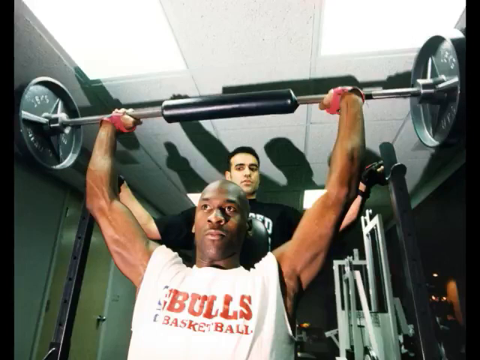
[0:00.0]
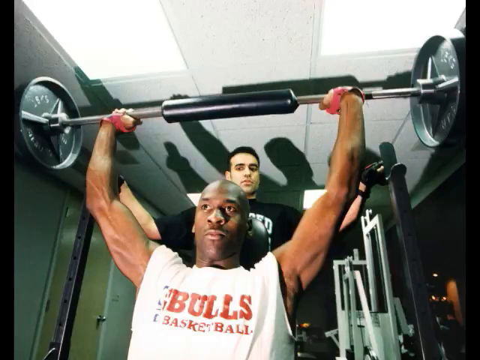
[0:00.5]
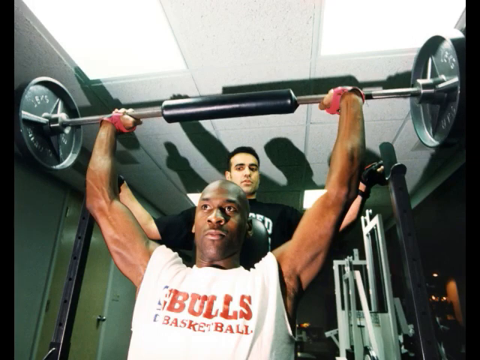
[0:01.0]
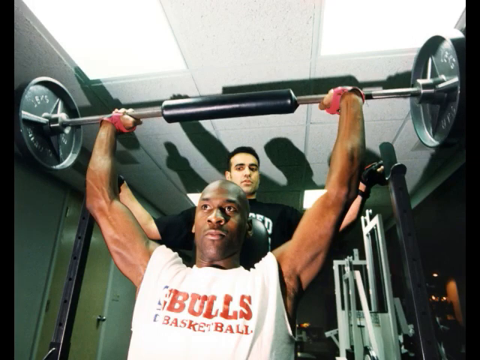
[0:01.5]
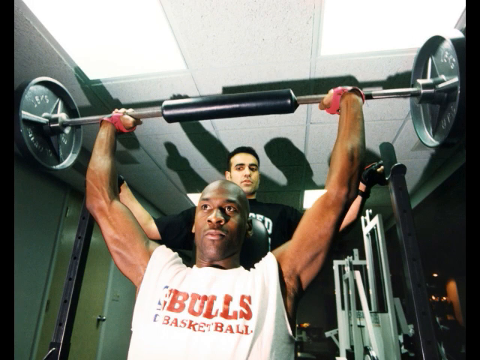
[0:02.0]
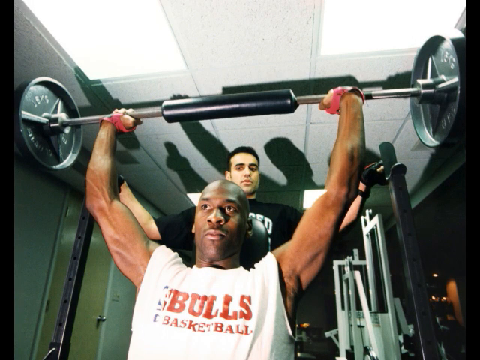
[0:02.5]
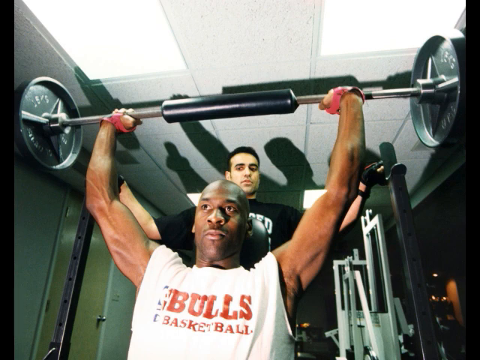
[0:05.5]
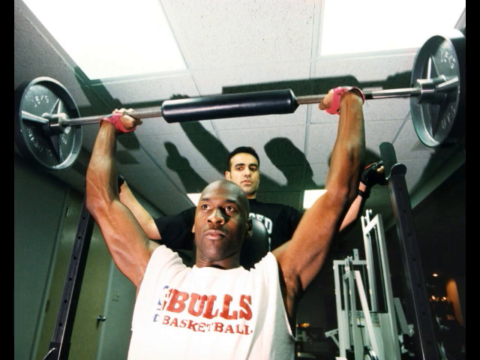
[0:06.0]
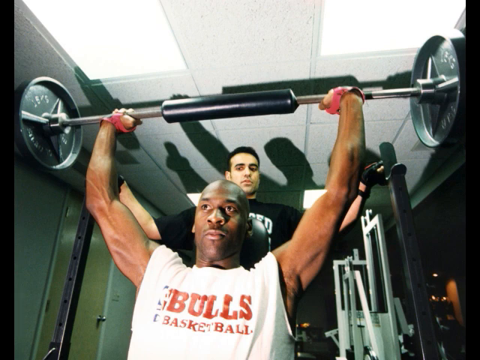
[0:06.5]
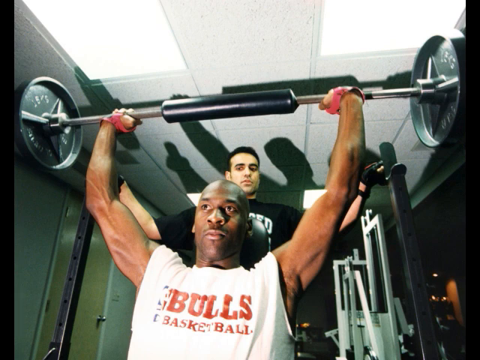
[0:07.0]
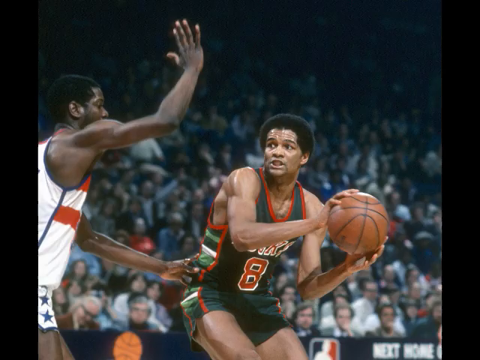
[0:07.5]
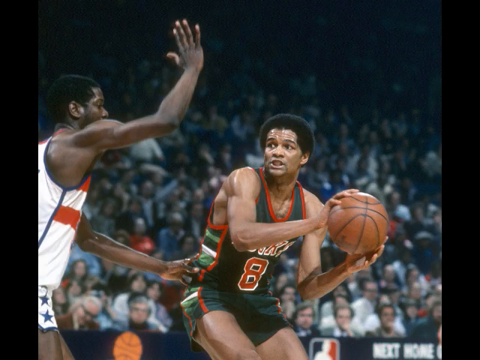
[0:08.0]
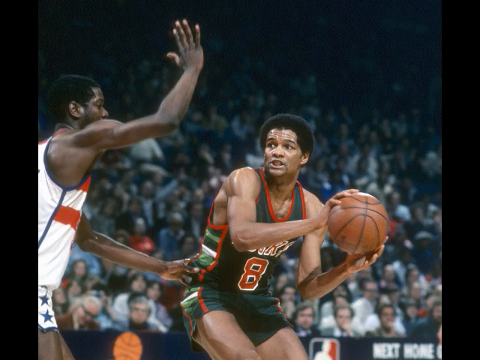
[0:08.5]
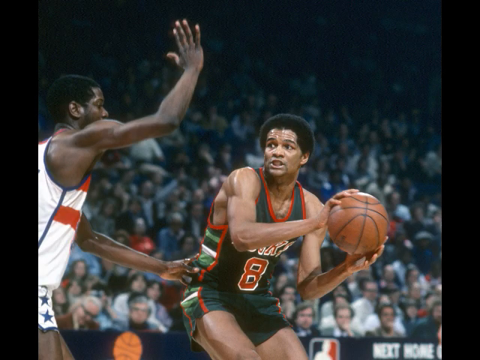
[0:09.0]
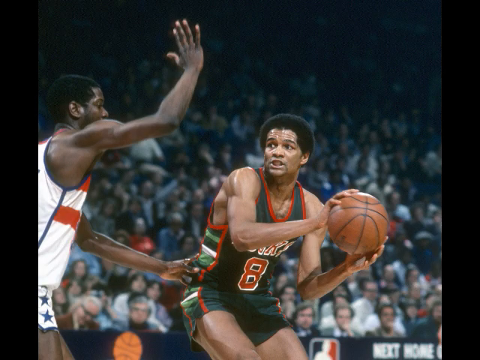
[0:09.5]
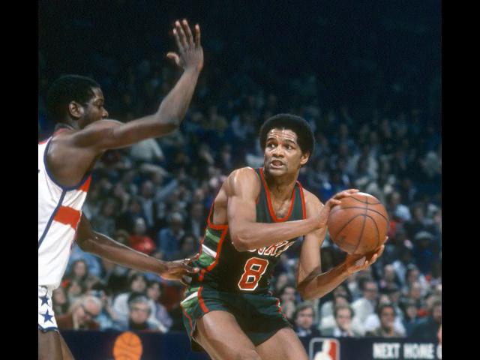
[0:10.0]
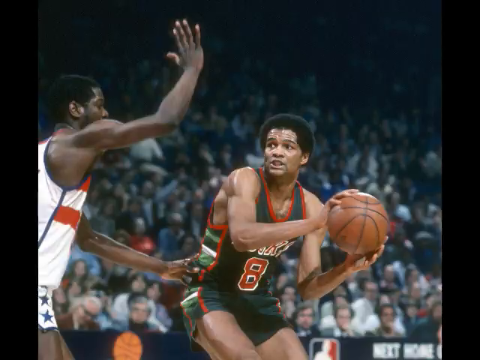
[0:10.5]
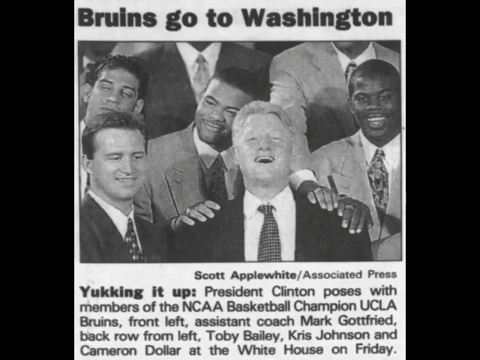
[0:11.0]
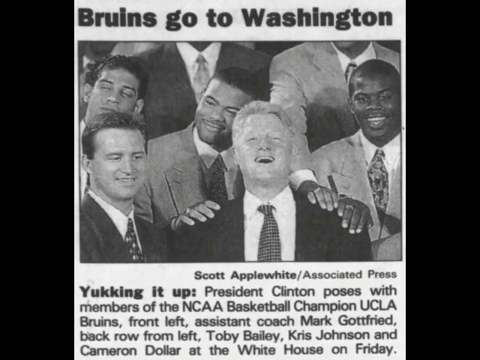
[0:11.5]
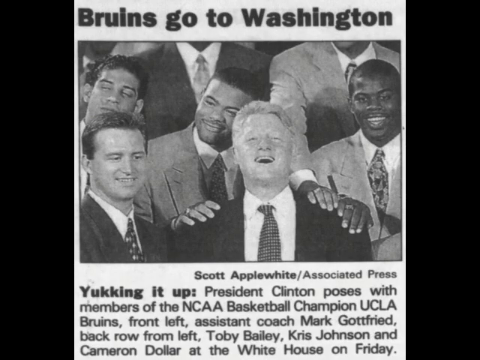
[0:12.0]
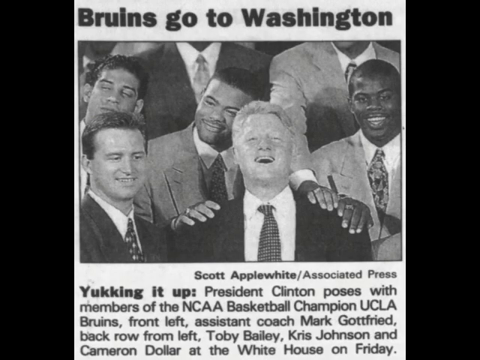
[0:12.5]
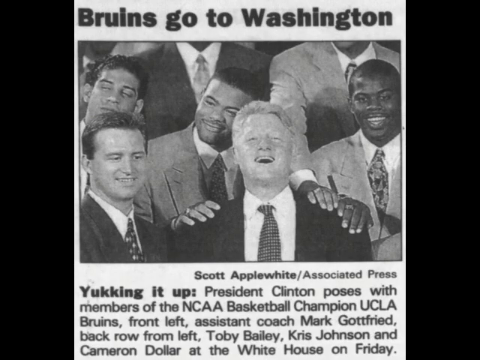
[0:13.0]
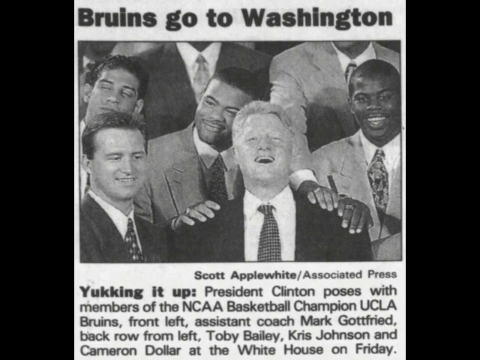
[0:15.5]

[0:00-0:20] Two men who look like athletes are in a weight room. One of them, possibly Michael Jordan, is doing weights on a bench, and another individual behind him appears to be spotting him. The view pans to an older basketball picture showing a player wearing number eight, possibly in a Sonics uniform, being guarded by another person whose uniform can't be made out; both are African American males. Next comes a black-and-white newspaper clipping with the text "Bruins go to Washington" and "President Clinton poses with members of the NCAA basketball champion, UCLA Bruins," followed by "front left, assistant coach Mark Gottfried." The players all wear suits and surround Bill Clinton, who appears to be laughing a bit, as do most of the players.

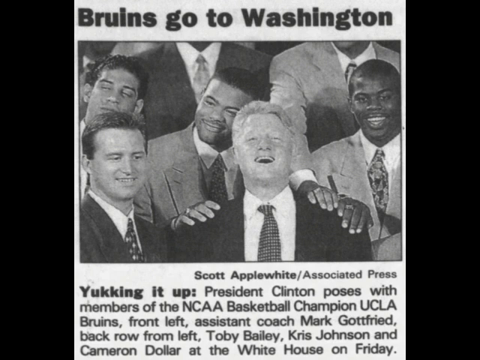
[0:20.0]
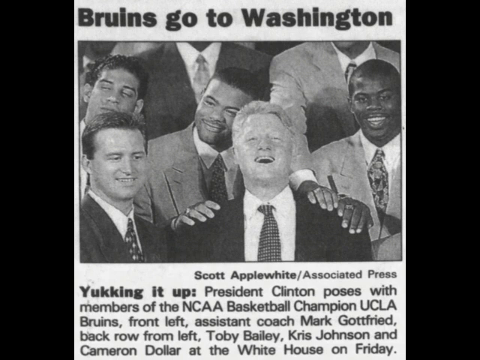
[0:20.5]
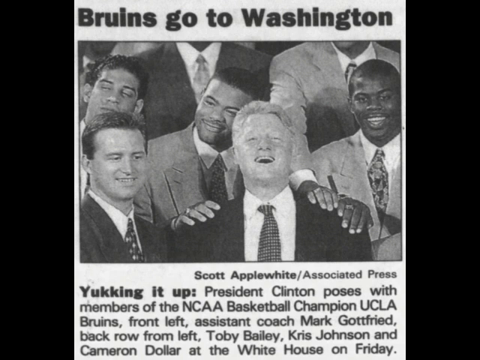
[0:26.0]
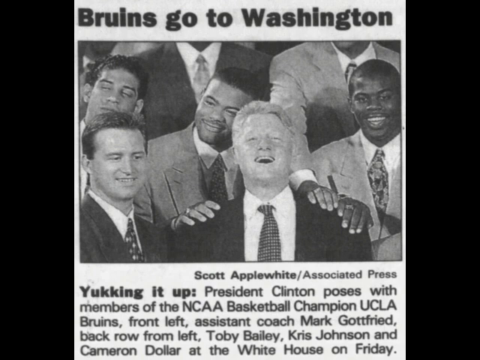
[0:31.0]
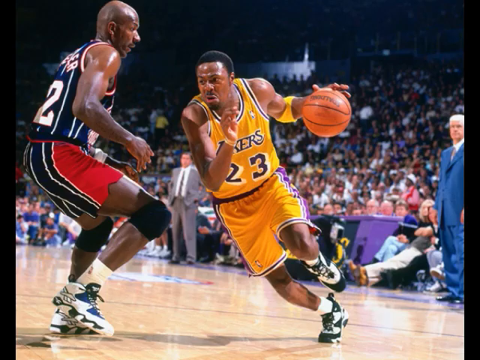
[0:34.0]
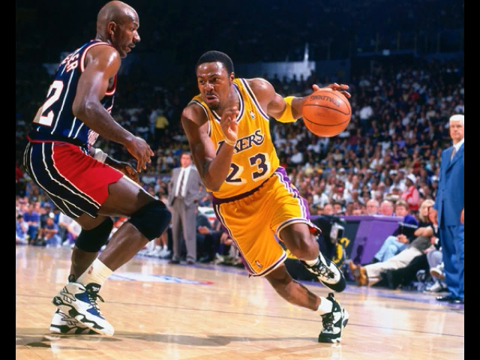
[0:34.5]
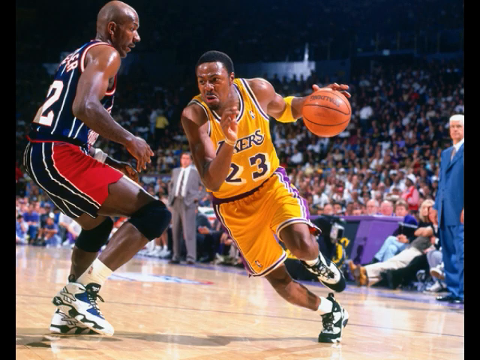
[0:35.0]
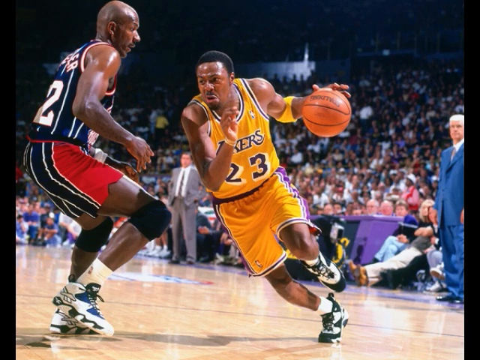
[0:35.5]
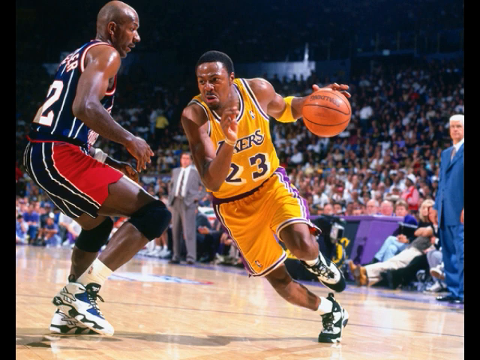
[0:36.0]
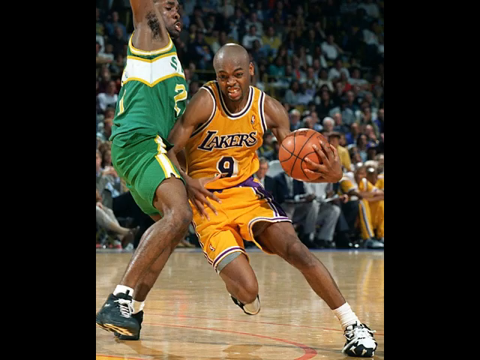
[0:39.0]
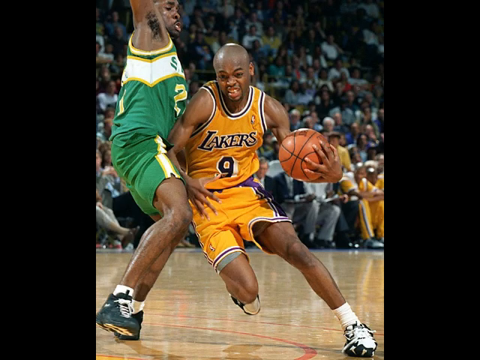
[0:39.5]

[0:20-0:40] The newspaper clipping titled "Bruins go to Washington" stays on screen, showing Clinton in his suit with what seem to be players around him. Underneath it reads "Scott Applewhite / Associated Press," followed by the article title "yucking it up." The view pans to an older image of the Lakers playing against another team, maybe the Raptors. Number 23 on the Lakers moves with the basketball in mid-motion with a look of intensity, and a coach in a blue suit is behind him. The view then pans to another picture of two African American males. The one on the Lakers holds the ball kind of tucked in a cradle-like position, moving it with an intense expression; this player has a bald head, and their shoe is turned a bit from moving fast.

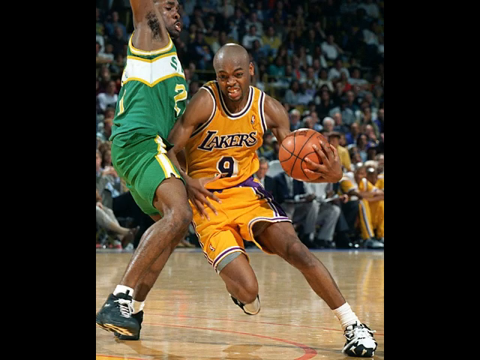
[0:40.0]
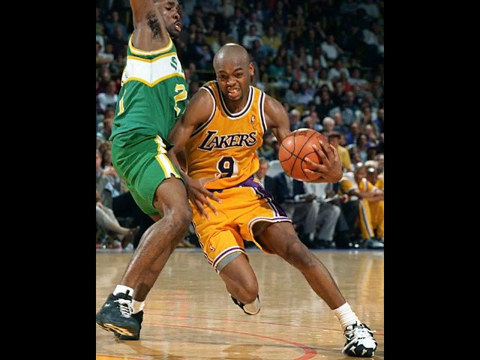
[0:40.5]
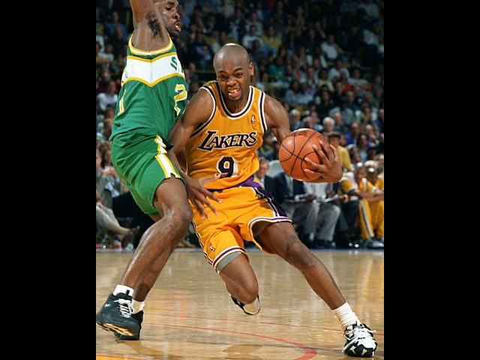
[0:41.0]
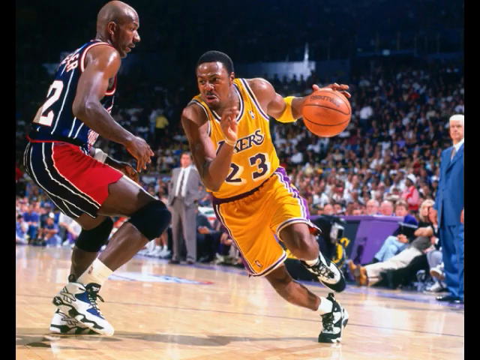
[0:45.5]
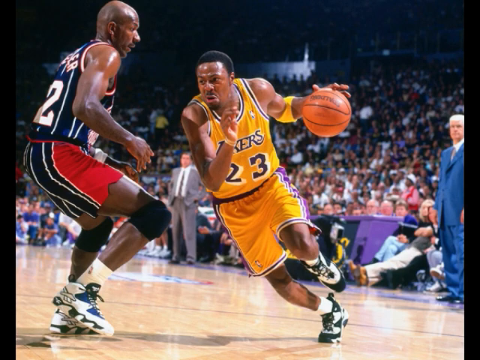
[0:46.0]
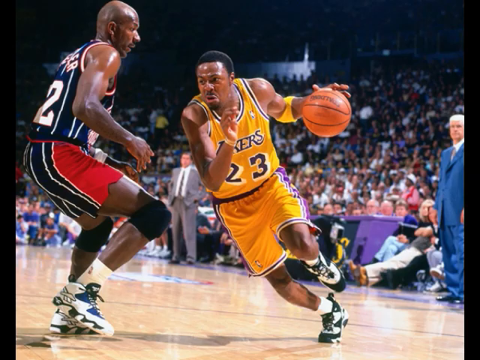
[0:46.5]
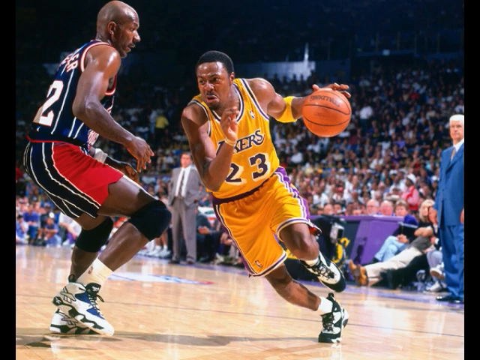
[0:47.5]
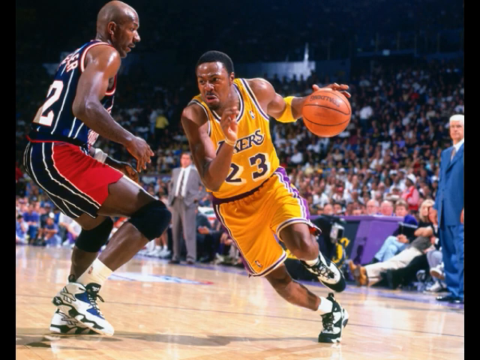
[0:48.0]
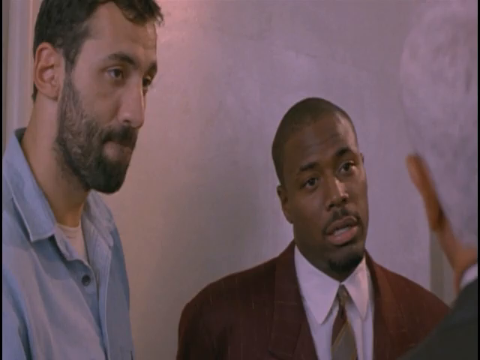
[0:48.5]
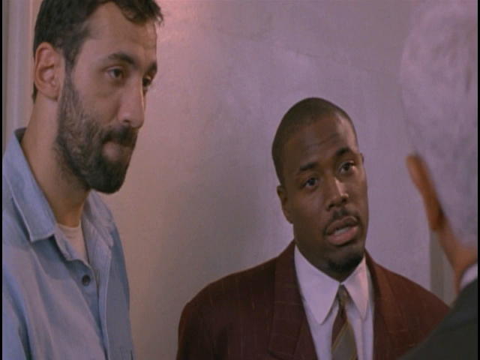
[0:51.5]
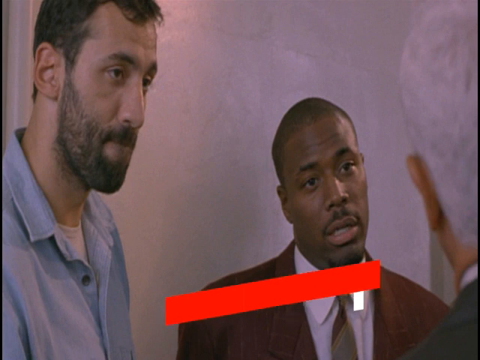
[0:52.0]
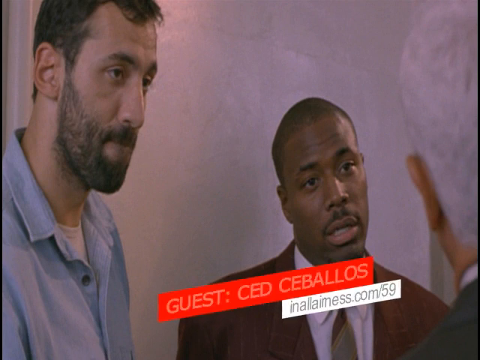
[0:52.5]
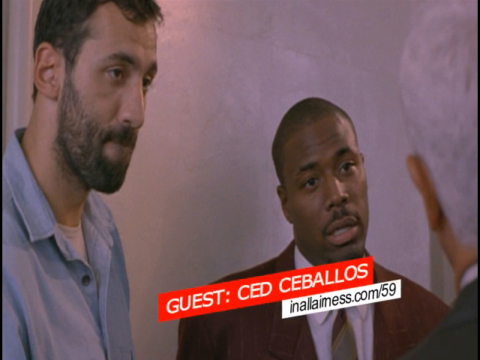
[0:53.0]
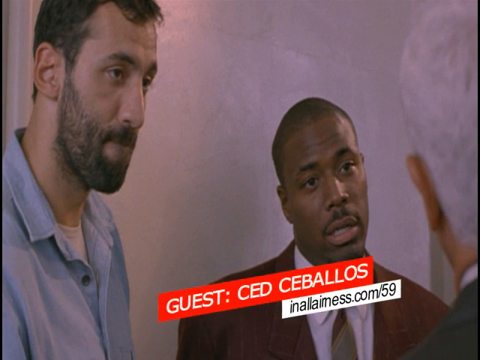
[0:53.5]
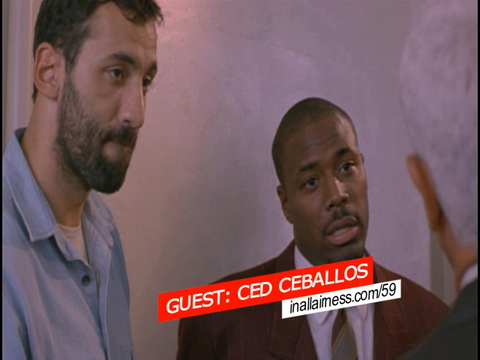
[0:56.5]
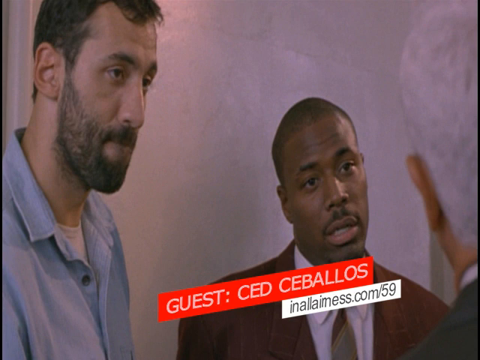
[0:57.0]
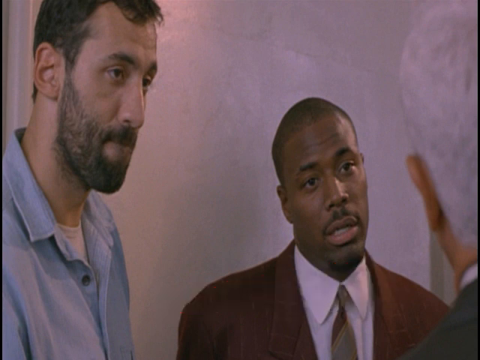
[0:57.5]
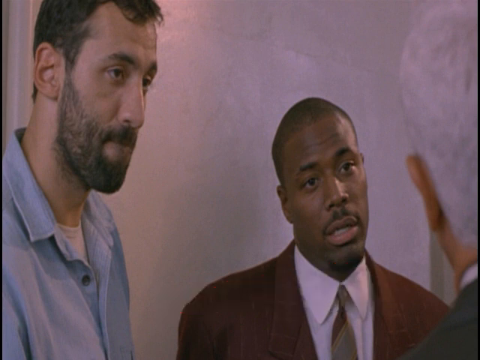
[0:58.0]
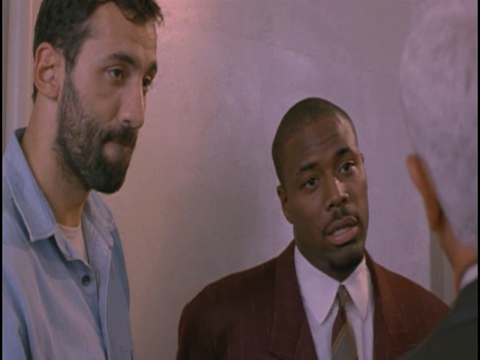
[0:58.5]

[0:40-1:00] Number 9 cradles the ball against another player, apparently in Sonics uniforms. A crowd is in the background, and the stadium looks almost full. Players sit around the basketball court, a couple of them in Lakers uniforms, closer to the right-hand side. Another shot pans around to number 23 once again, with the coach behind him in a full suit that is kind of sky blueish in color; the coach is an older white male. The view then pans to a picture that looks like something from a movie, showing a black male who is the shortest of the three people in the photo. There is text on the image with something like a handle underneath. In the background is what looks like a wall in a room, with light reflecting off it a bit.